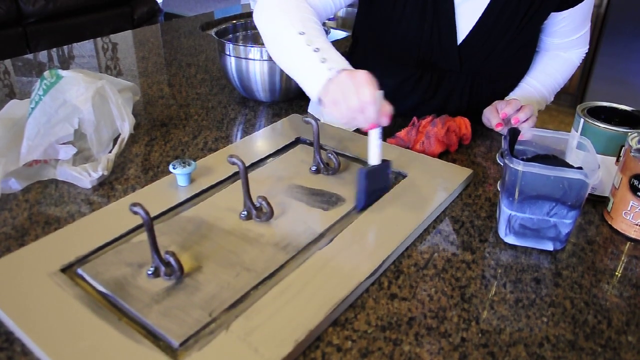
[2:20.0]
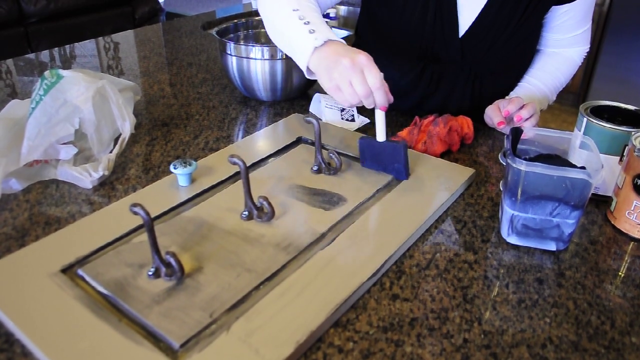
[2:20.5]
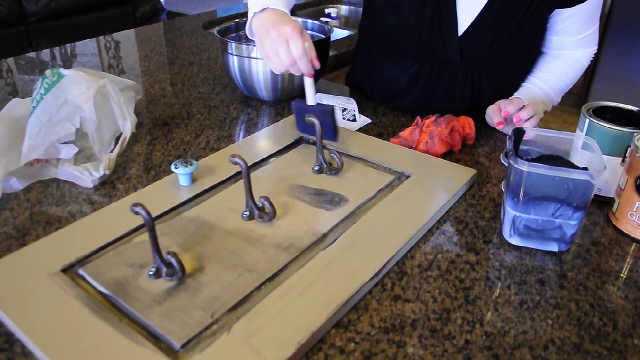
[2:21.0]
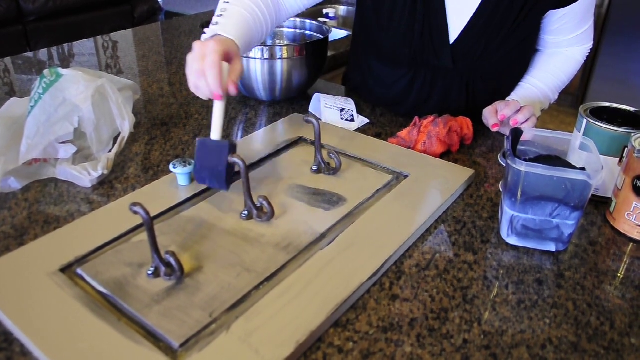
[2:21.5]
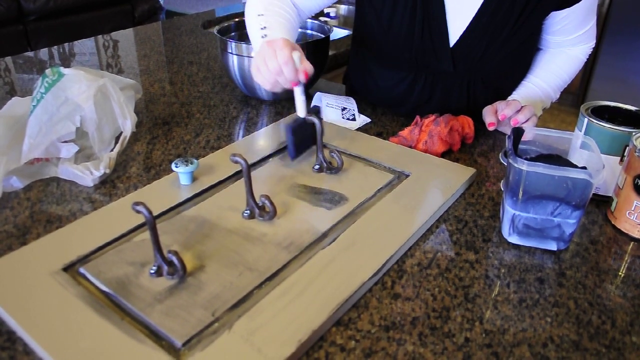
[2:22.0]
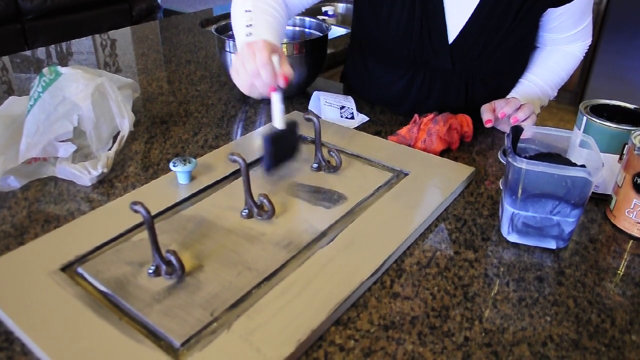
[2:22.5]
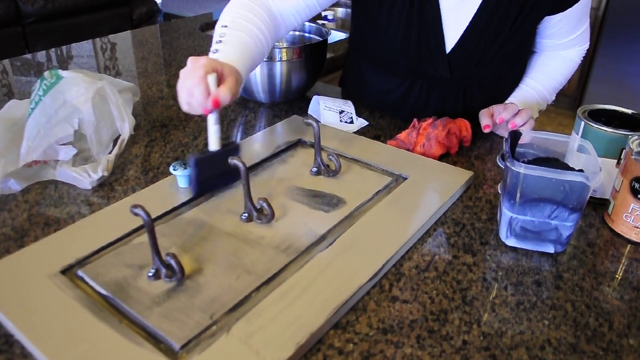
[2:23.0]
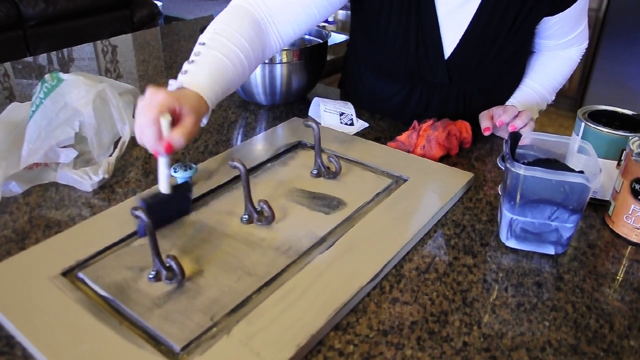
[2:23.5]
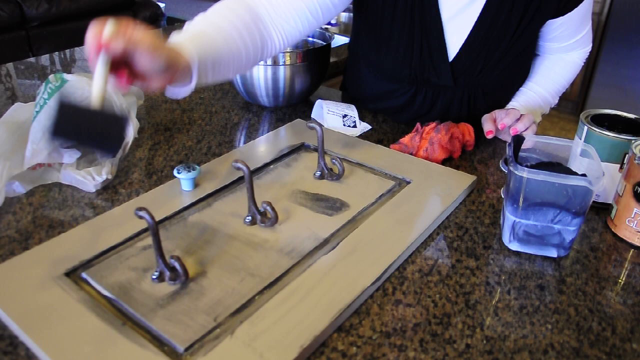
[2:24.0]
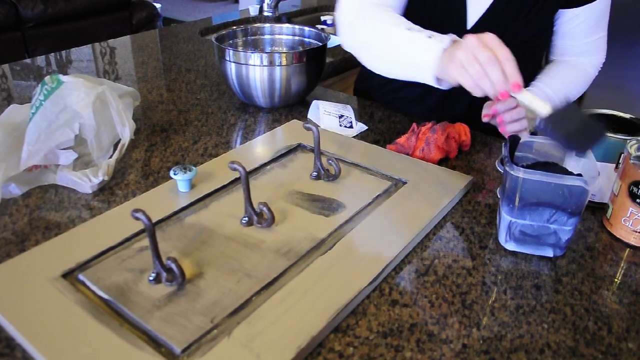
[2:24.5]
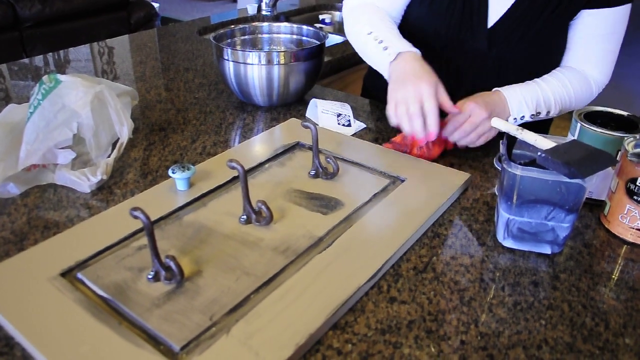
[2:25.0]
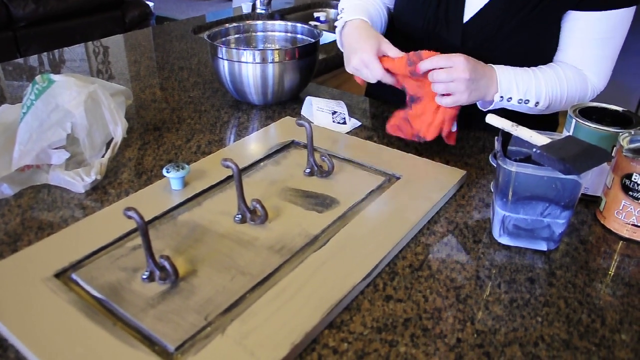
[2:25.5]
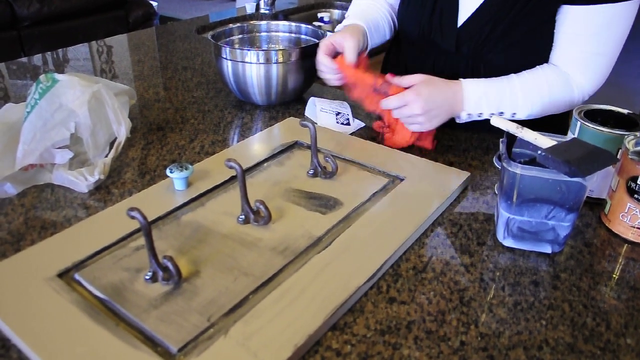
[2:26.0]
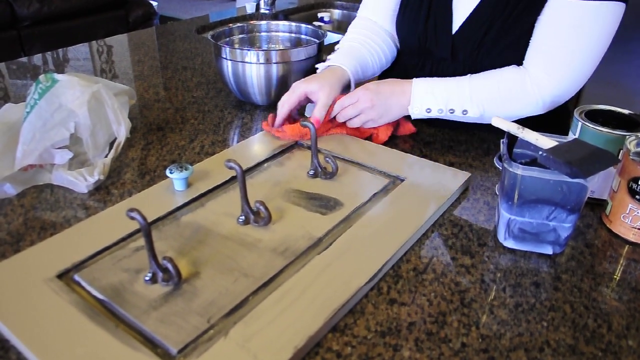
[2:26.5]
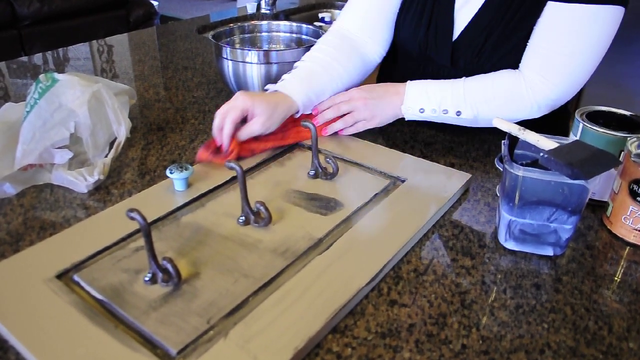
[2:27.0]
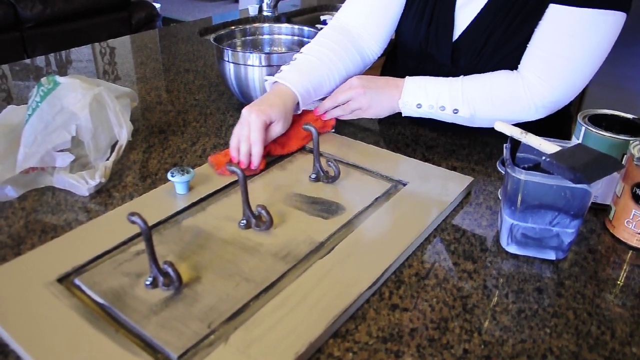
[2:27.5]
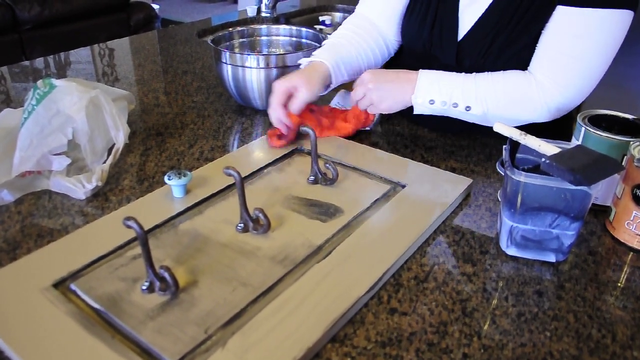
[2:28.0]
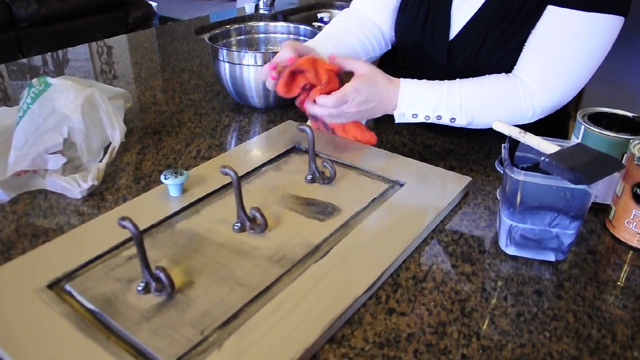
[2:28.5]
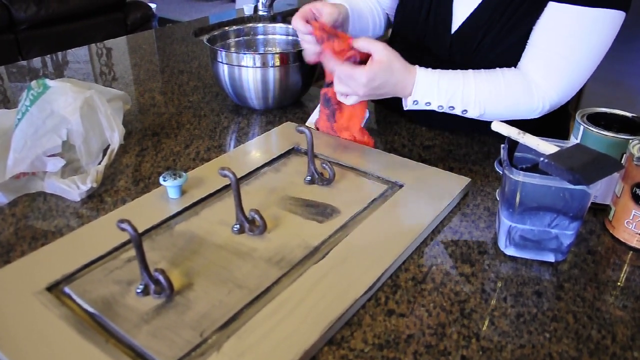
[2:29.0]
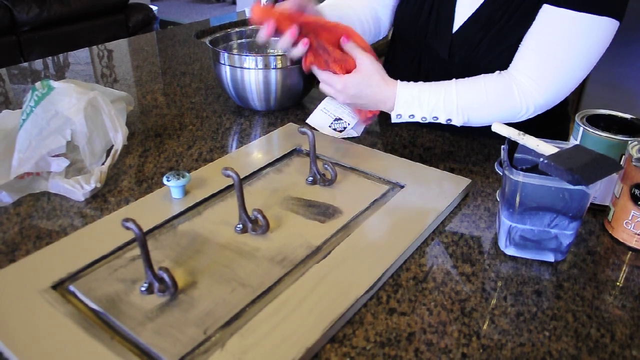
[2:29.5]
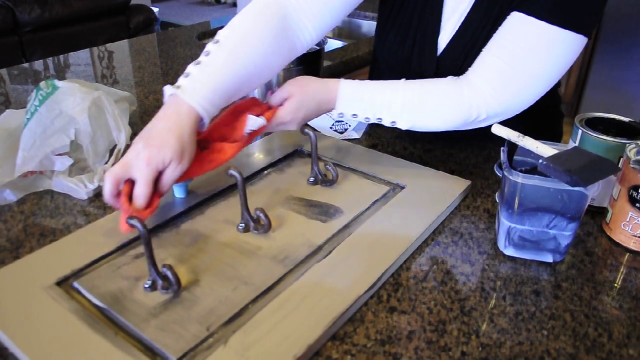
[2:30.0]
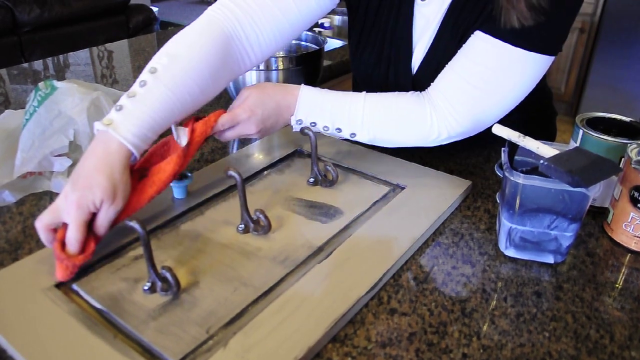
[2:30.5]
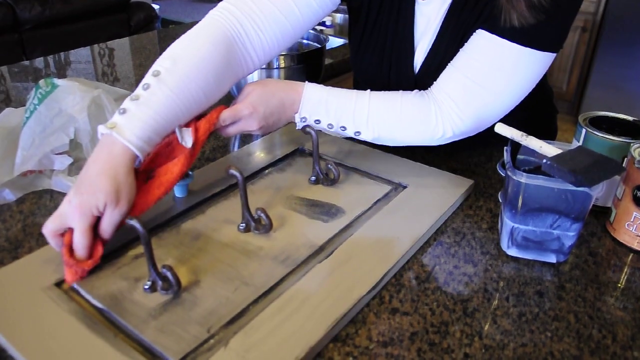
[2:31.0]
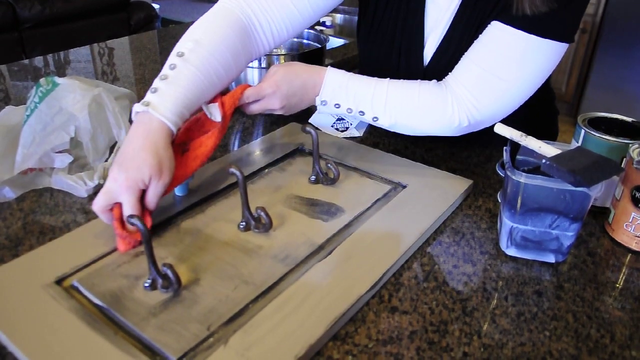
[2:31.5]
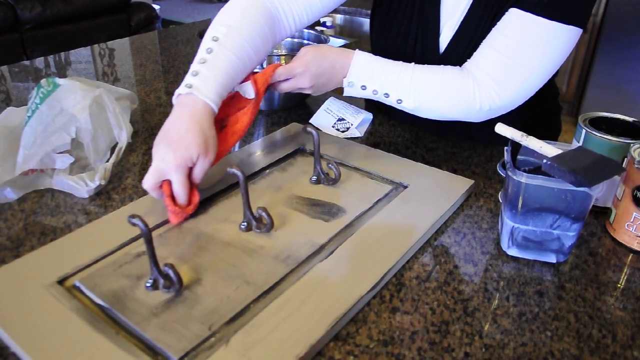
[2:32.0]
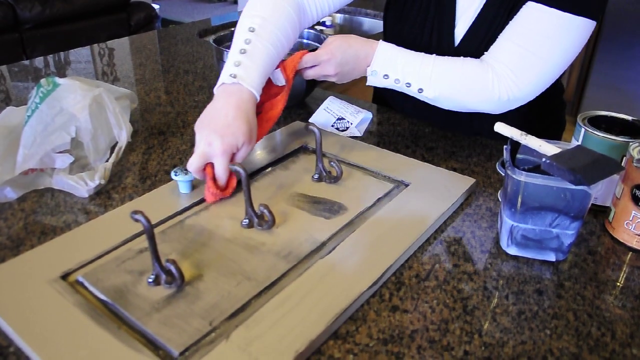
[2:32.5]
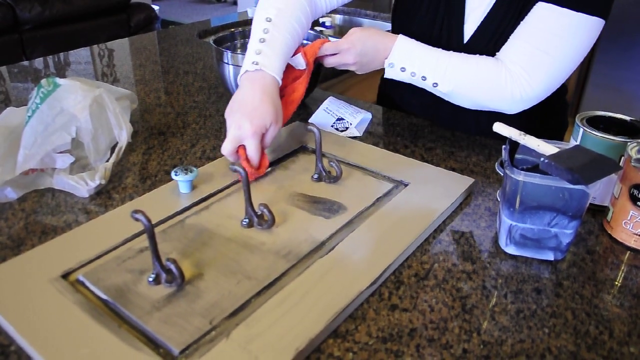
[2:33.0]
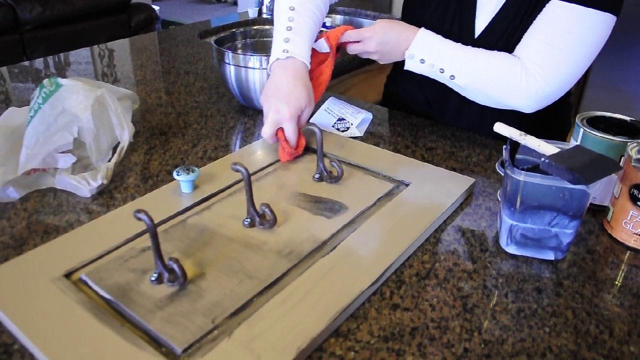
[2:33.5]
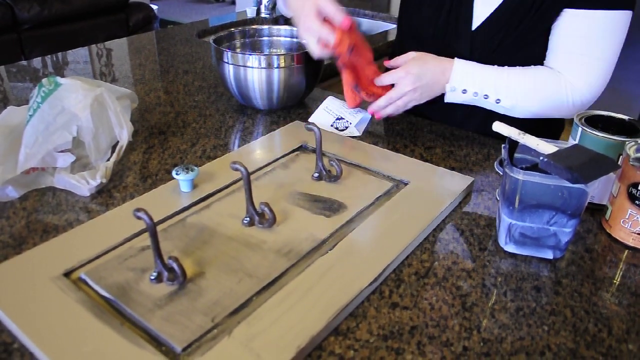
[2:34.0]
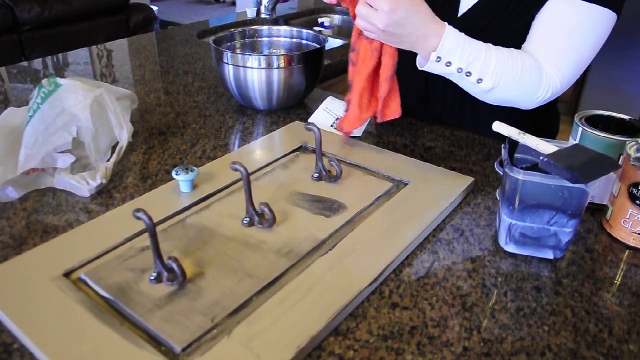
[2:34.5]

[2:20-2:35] In the YouTube video called How to Glaze Furniture, a woman applies glaze to a rectangular piece of wood. The glaze appears to be dark, like a black. She has applied it to a groove inside the wood, and inside the groove are three metal hooks of the type for hanging coats or hats; the piece appears to be something that will ultimately be hung on the wall. She has been using a sponge brush with a pointed edge to apply the glaze in the groove, and now mainly uses a red cloth with her finger pushed into it to wipe the glaze back out of the groove. She has also applied some glaze on the inner rectangle that forms a perimeter around the three hooks.